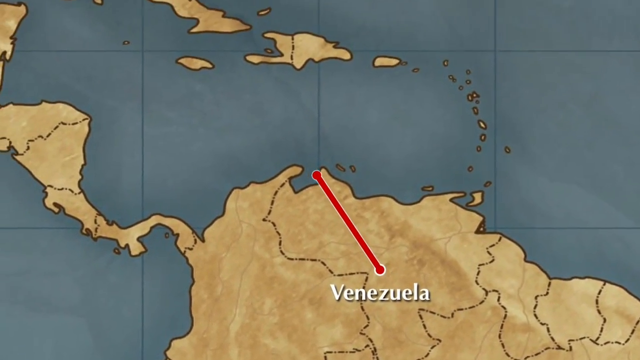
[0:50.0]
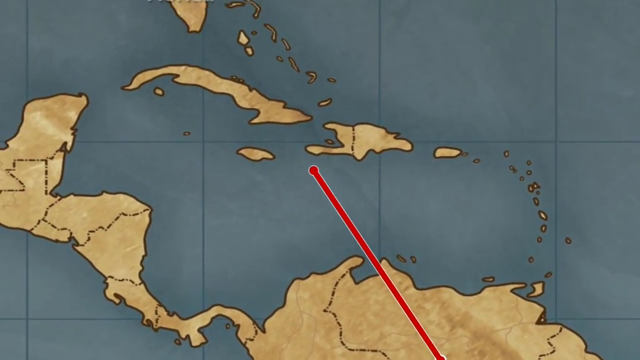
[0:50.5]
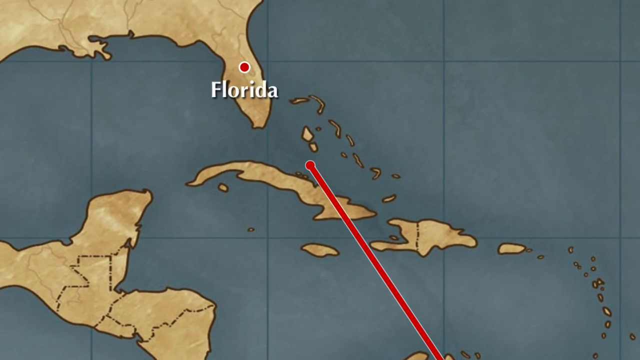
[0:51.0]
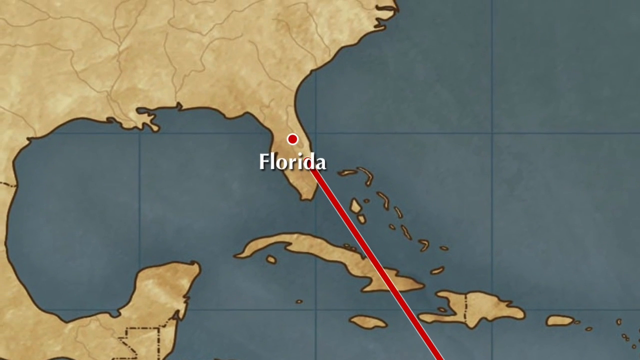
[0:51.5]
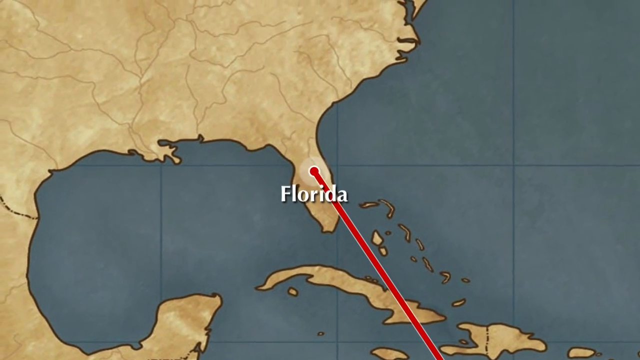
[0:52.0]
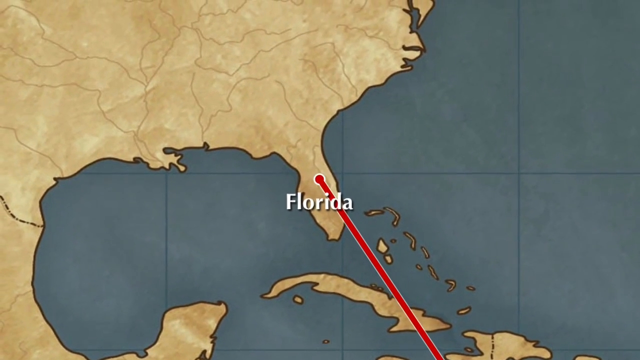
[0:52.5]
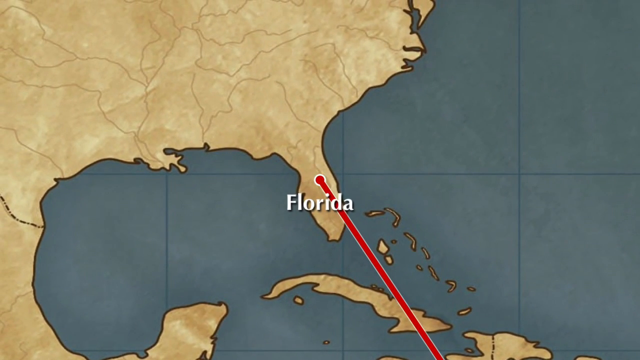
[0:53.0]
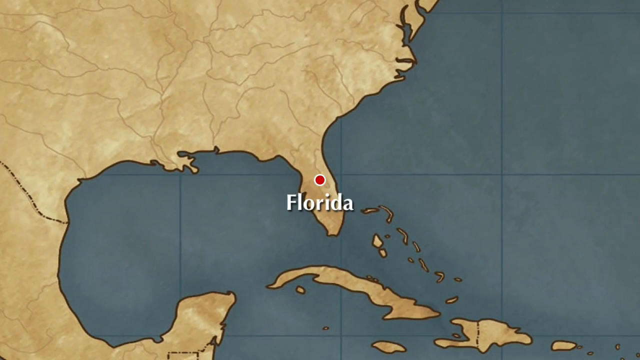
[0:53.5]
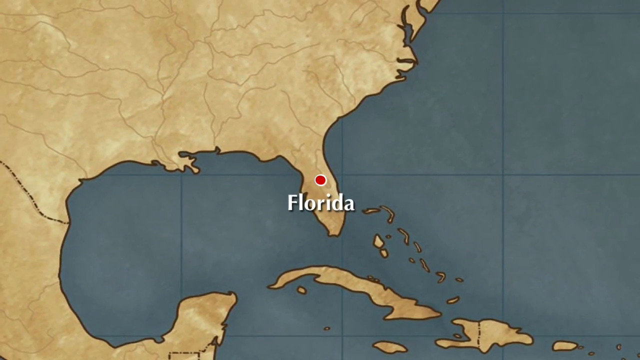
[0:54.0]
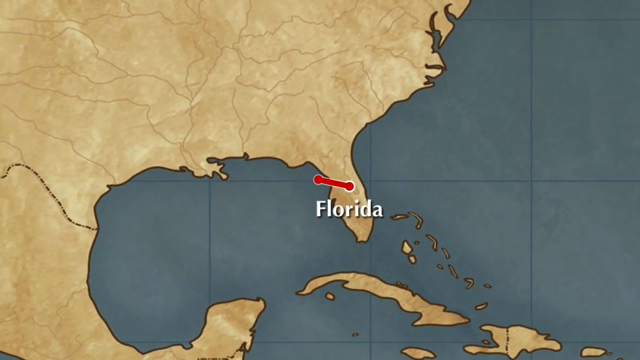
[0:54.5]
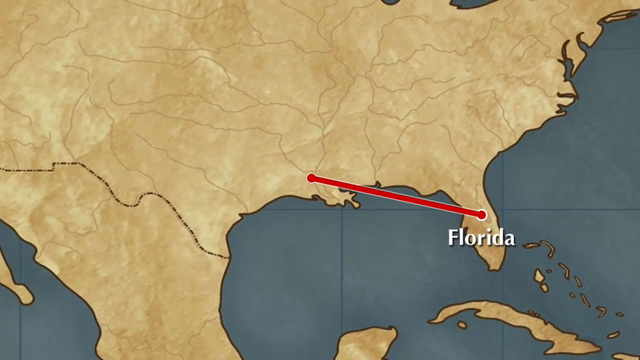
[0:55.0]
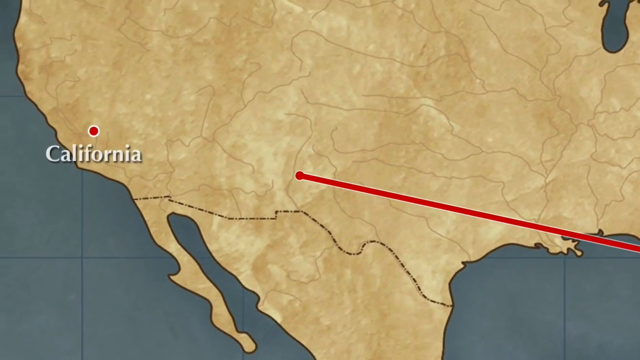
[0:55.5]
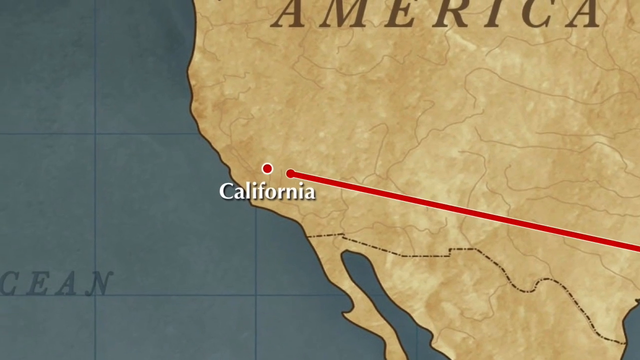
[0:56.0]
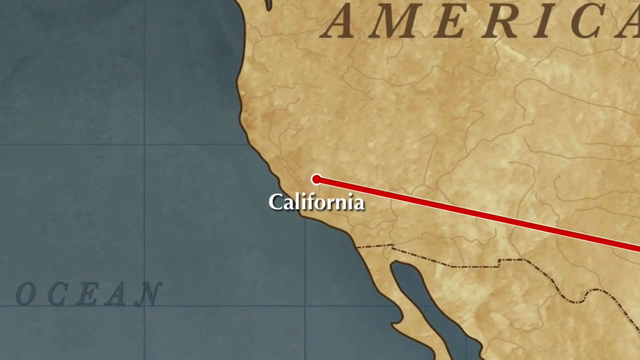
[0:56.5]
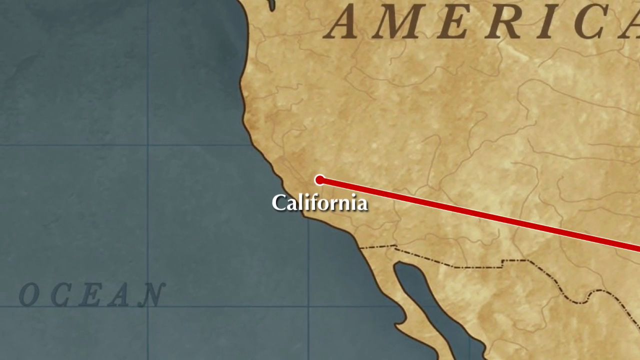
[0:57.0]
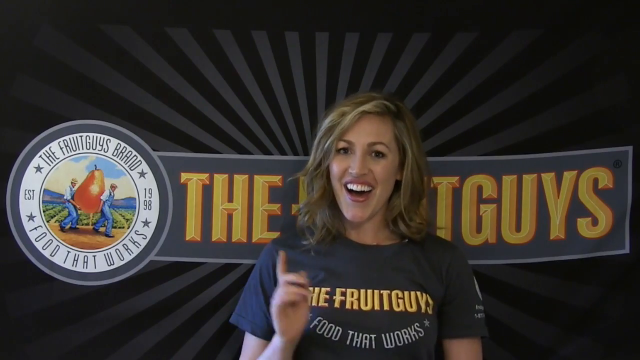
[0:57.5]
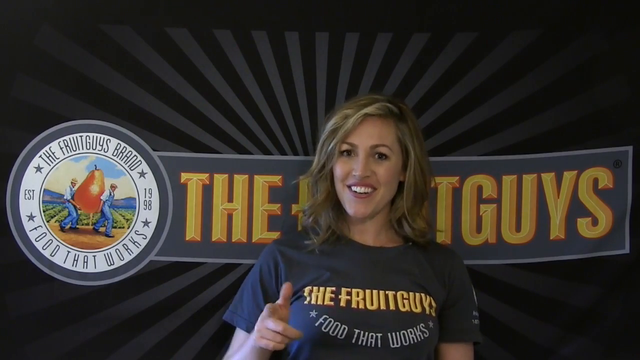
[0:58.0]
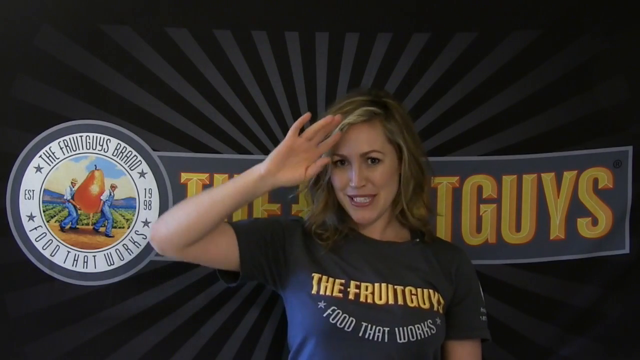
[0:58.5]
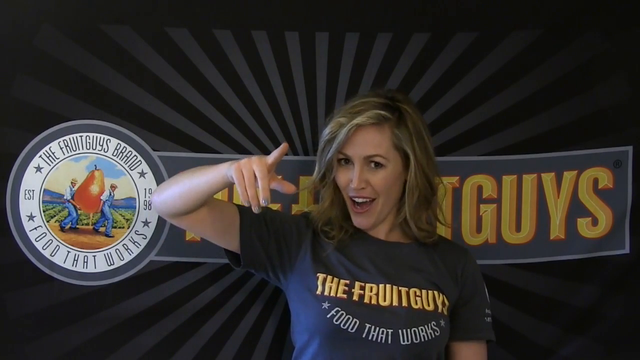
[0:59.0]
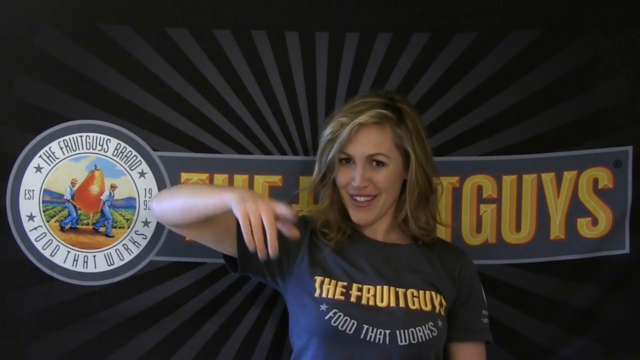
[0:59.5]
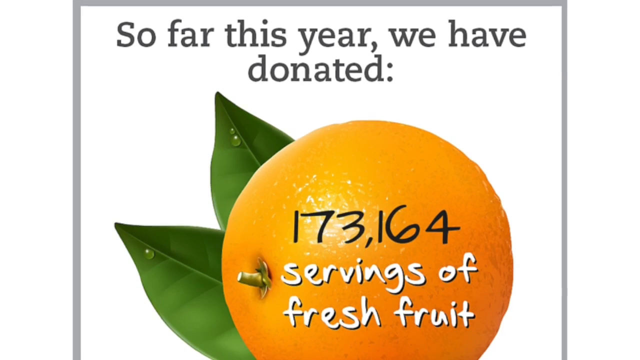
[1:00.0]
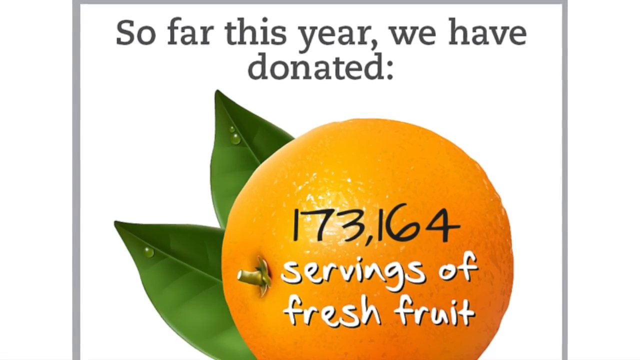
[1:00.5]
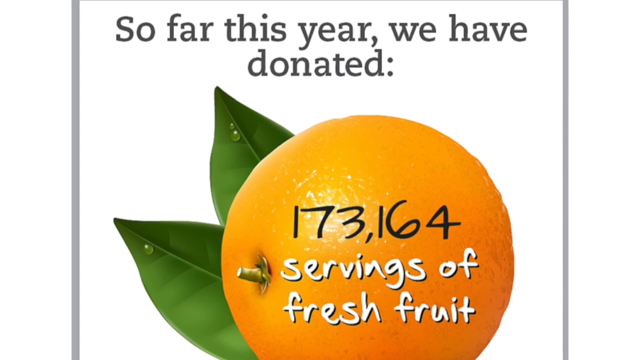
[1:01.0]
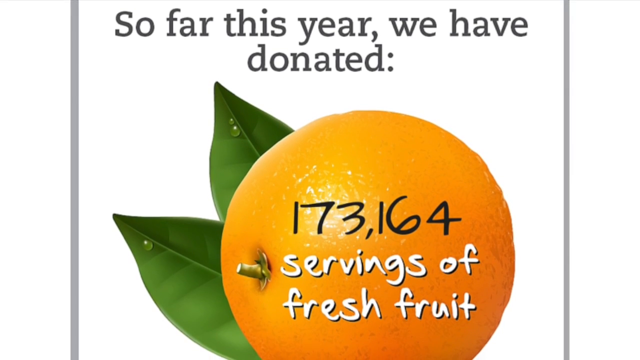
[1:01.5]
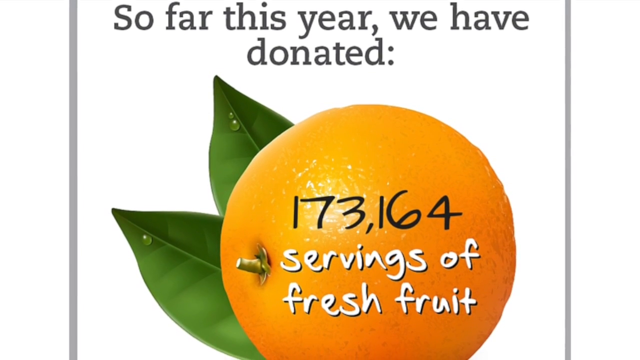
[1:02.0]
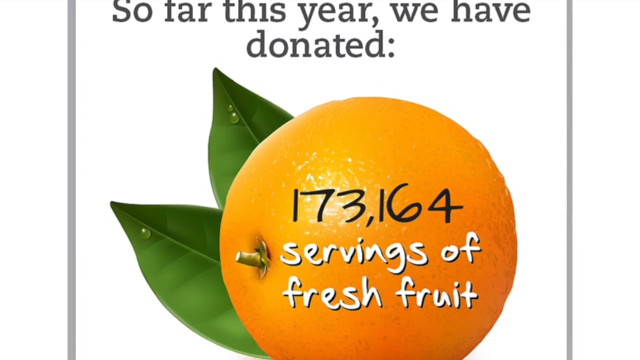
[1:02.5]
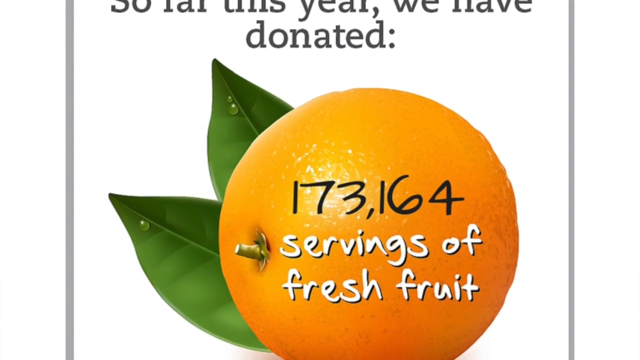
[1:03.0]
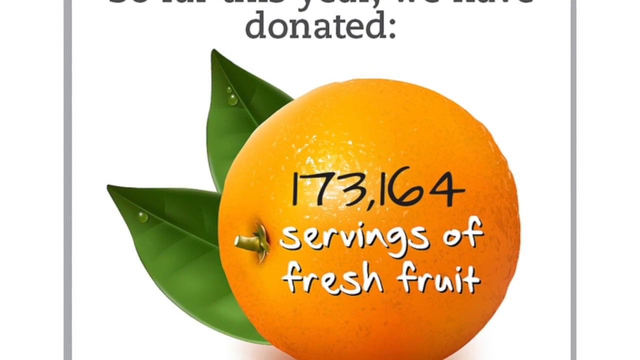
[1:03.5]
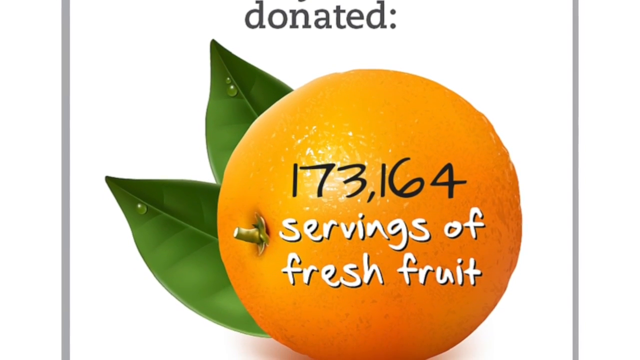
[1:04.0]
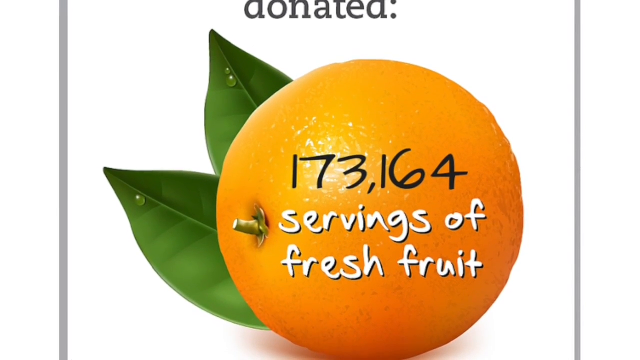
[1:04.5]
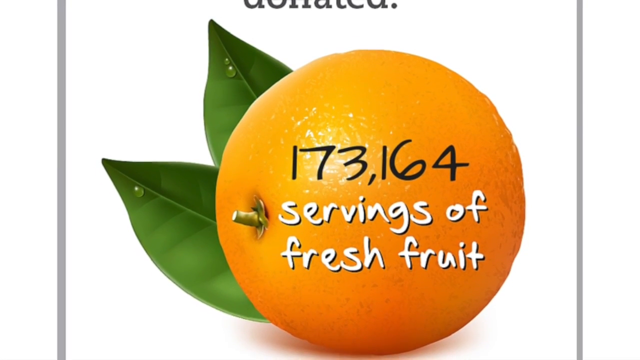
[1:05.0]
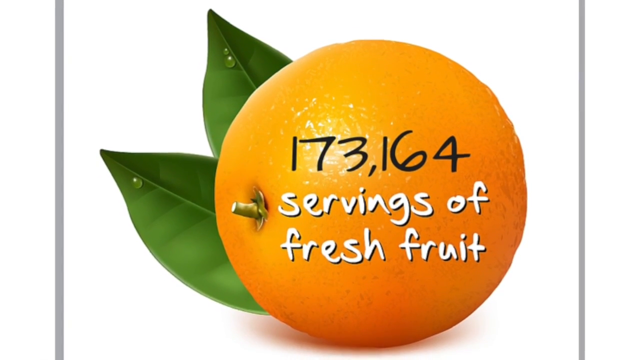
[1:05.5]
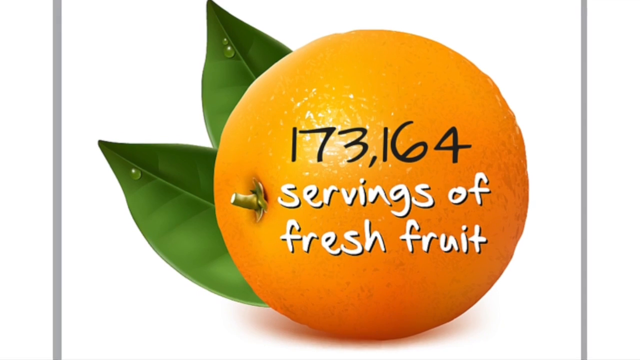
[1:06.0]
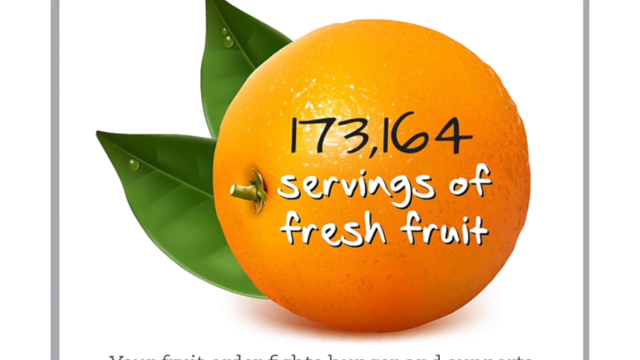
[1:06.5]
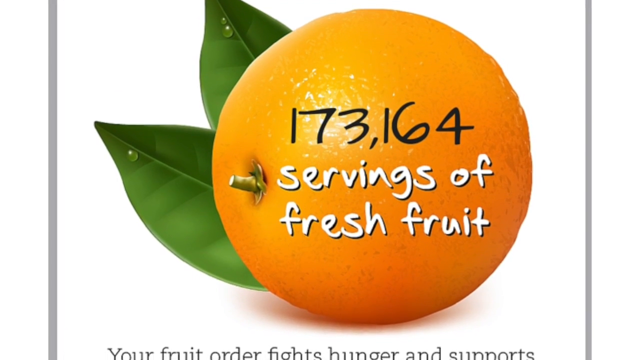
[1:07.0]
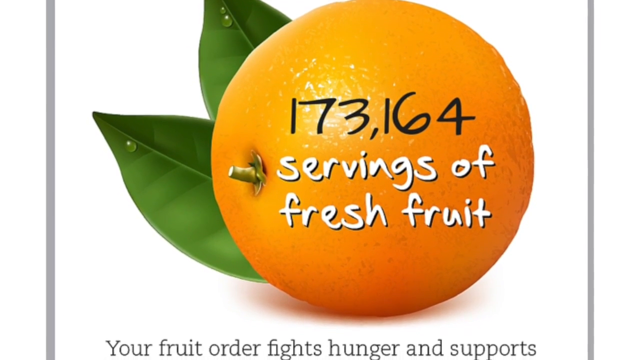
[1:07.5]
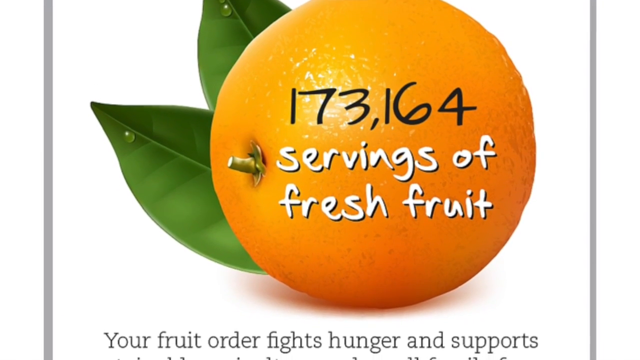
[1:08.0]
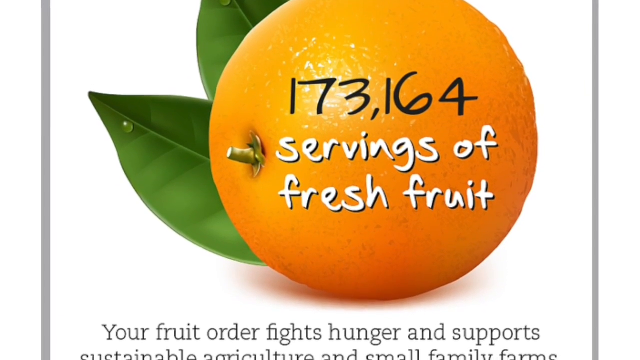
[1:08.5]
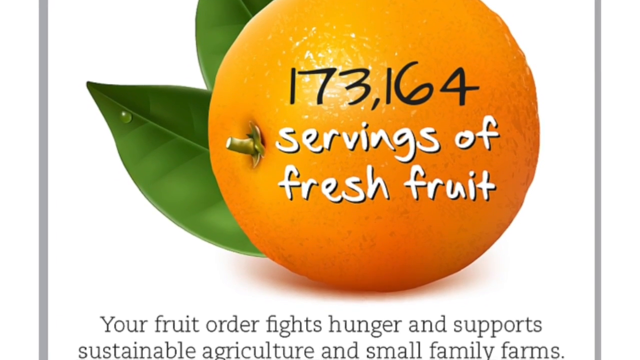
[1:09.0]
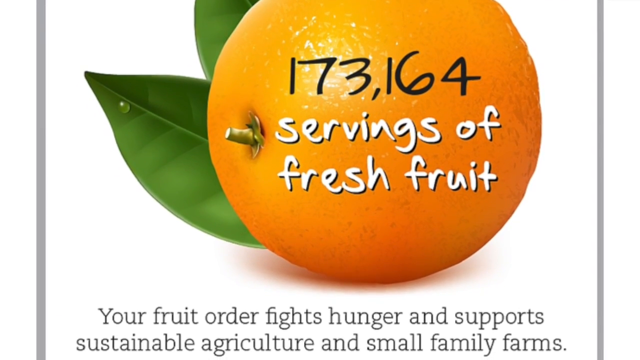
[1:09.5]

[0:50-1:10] A digitally drawn map shows Venezuela, with a digital red line going from Venezuela to Florida, and then a line is drawn from Florida to California. A woman pops up on screen, smiling in front of a sign that says "the fruit guys." On the next page, words at the top say "so far this year we have donated," and on top of a grapefruit or orange it says "173,164 servings of fresh fruit." The fruit is shiny and looks digitally produced, with two green leaves that each seem to have a little drop of rain coming down. Words then begin to appear at the bottom: "your fruit order fights hunger and supports," followed by "sustainable agriculture and small family farms."